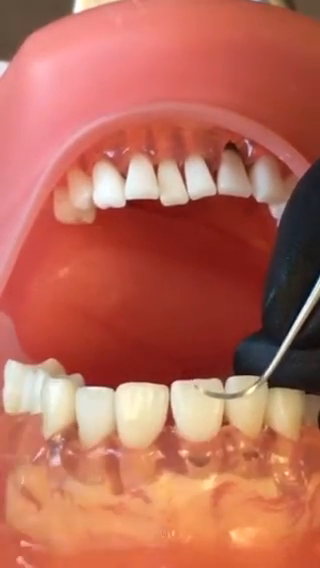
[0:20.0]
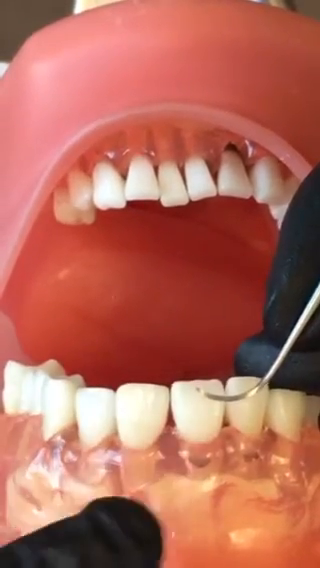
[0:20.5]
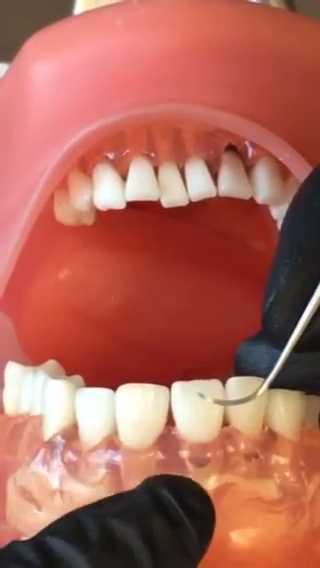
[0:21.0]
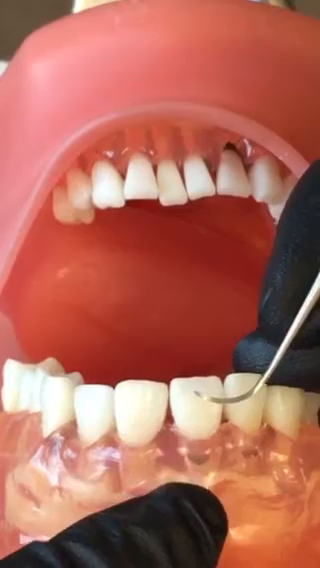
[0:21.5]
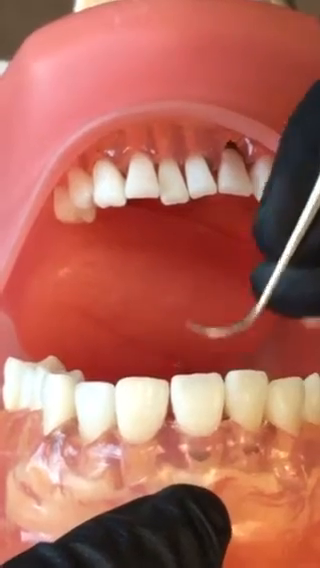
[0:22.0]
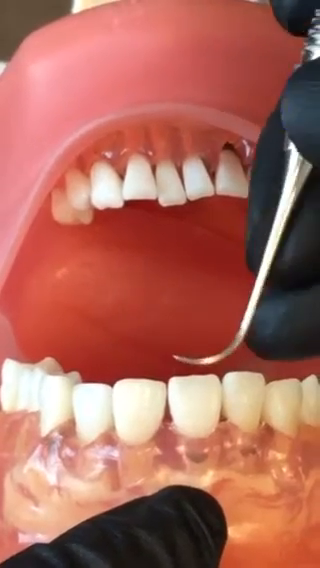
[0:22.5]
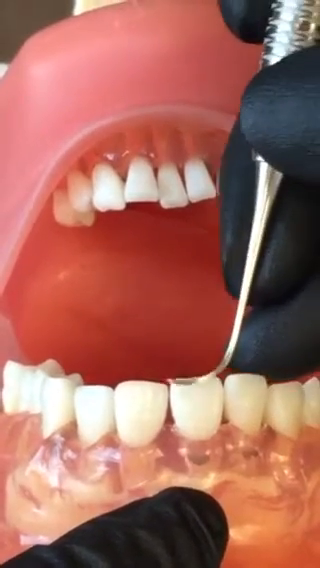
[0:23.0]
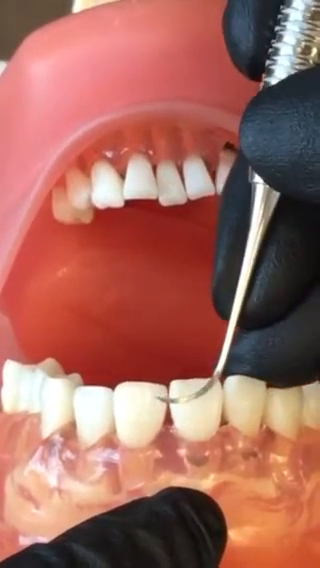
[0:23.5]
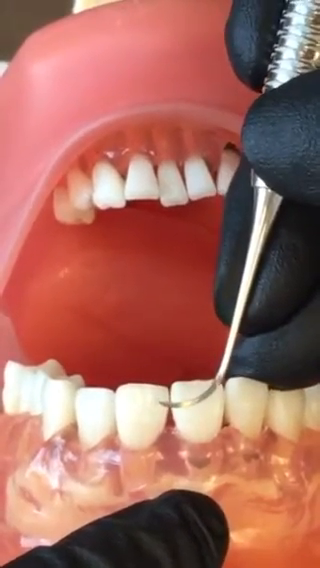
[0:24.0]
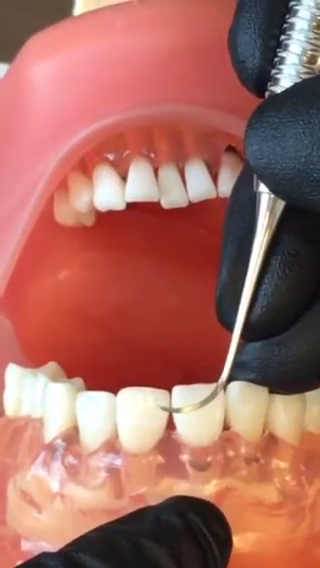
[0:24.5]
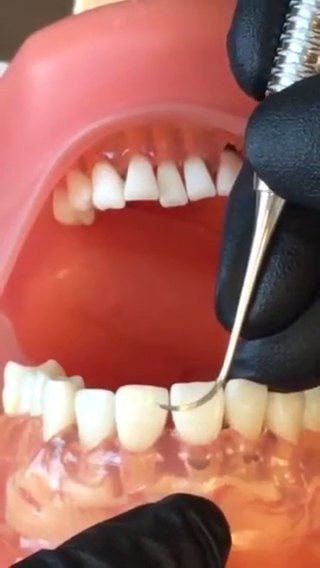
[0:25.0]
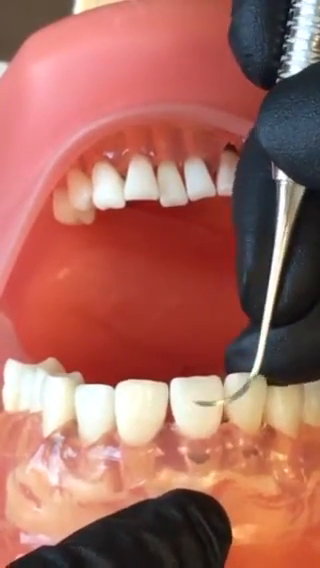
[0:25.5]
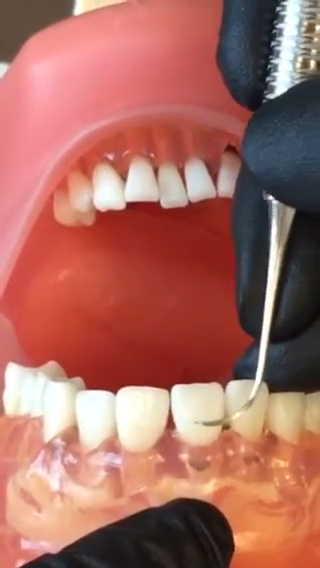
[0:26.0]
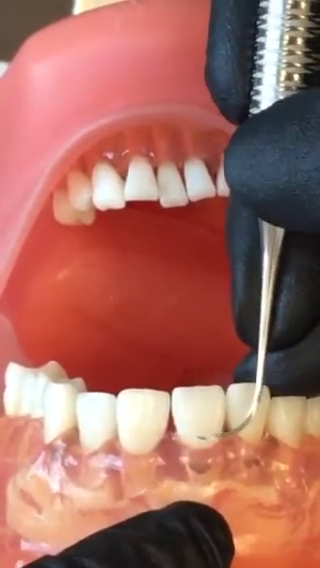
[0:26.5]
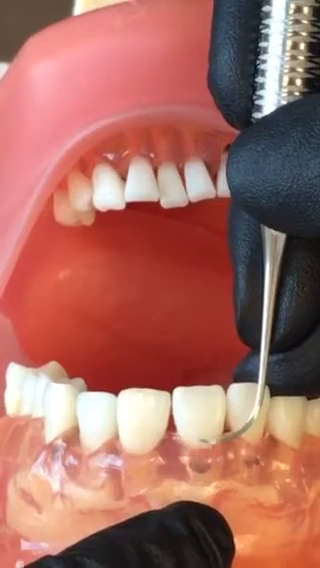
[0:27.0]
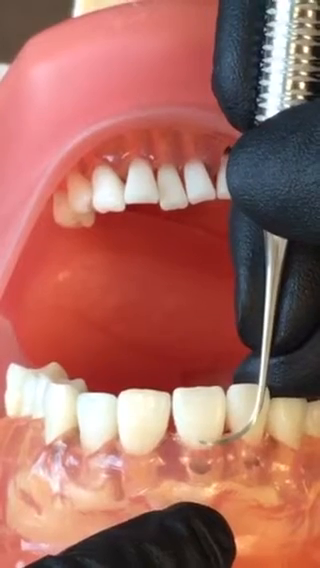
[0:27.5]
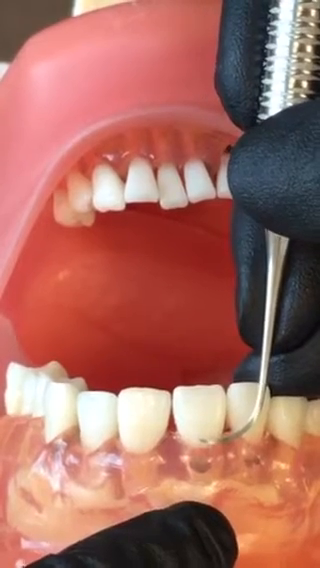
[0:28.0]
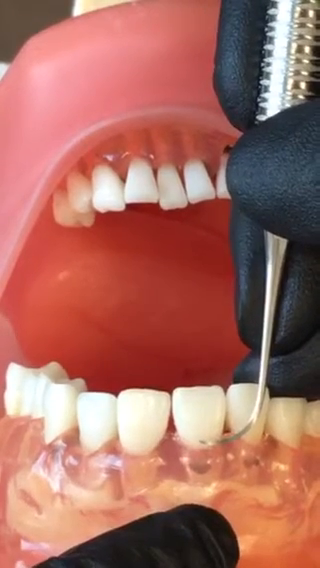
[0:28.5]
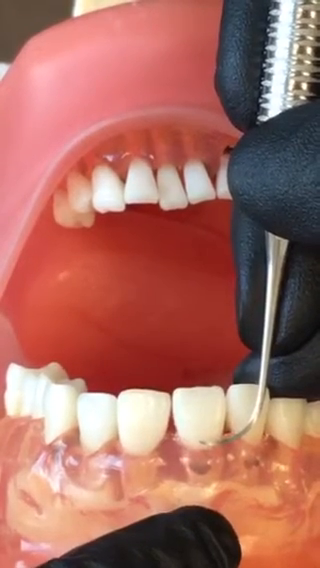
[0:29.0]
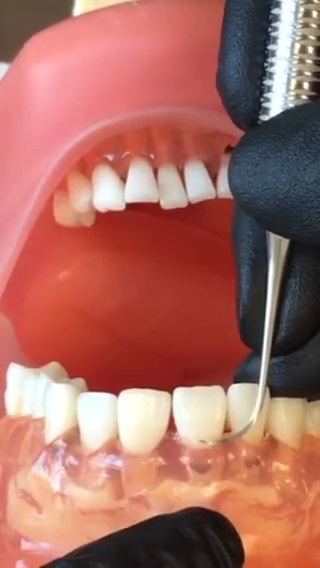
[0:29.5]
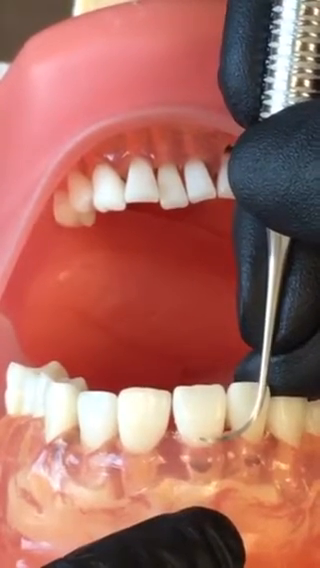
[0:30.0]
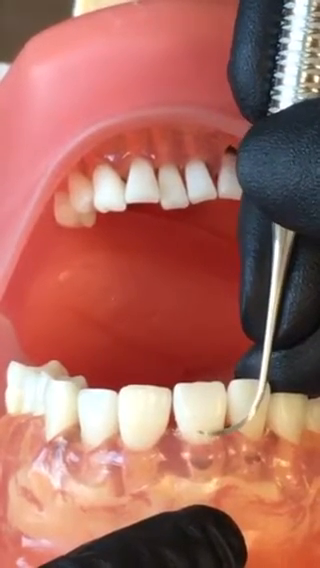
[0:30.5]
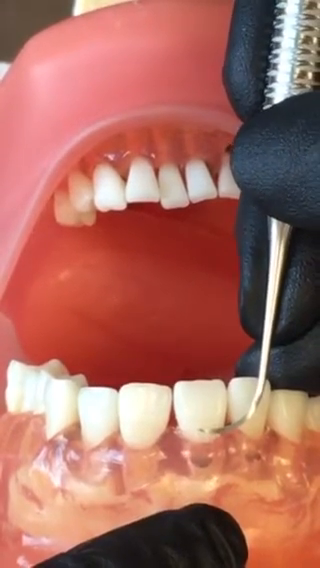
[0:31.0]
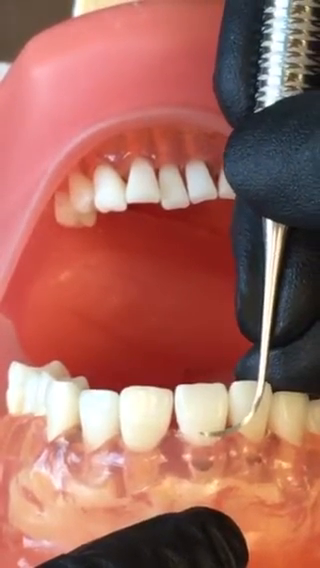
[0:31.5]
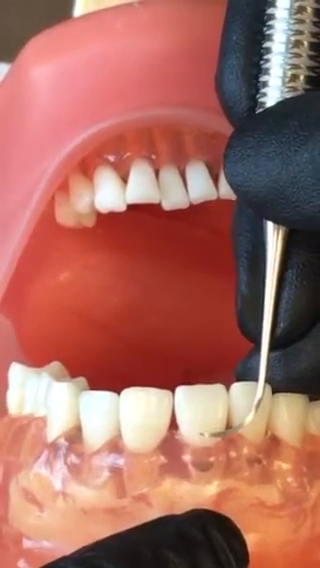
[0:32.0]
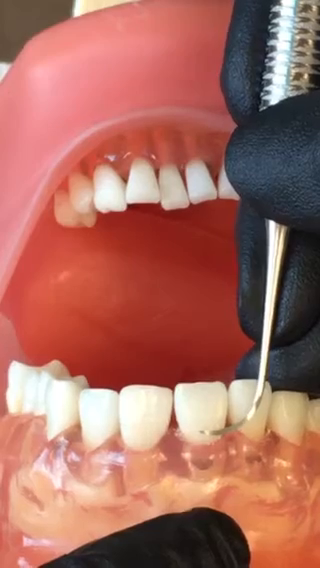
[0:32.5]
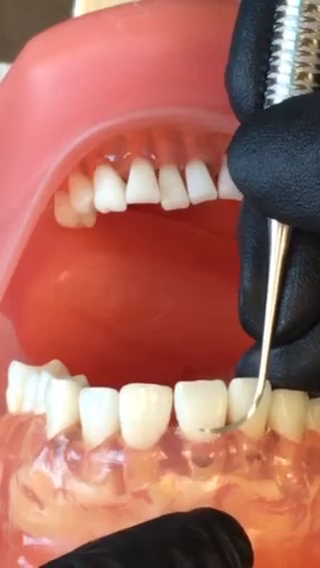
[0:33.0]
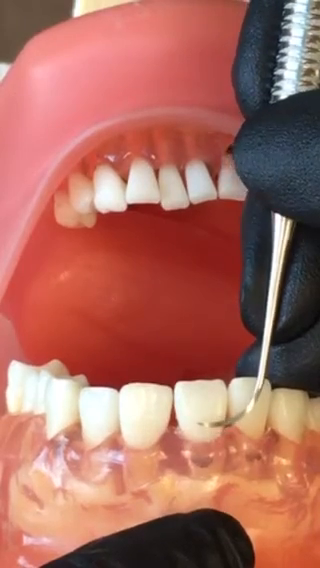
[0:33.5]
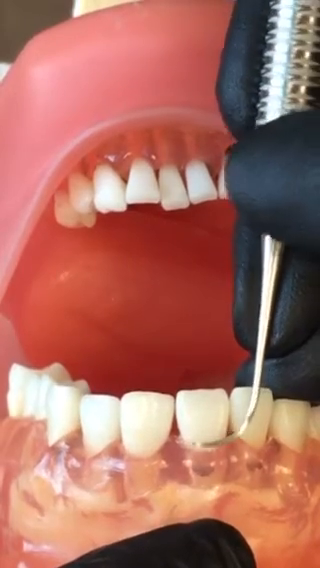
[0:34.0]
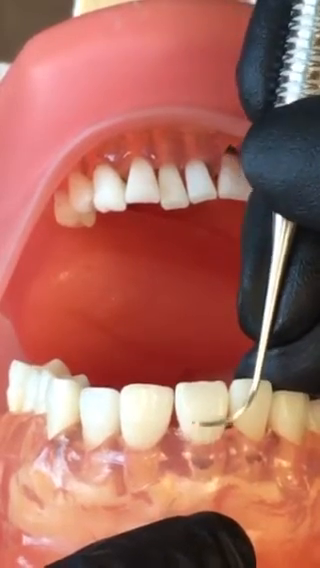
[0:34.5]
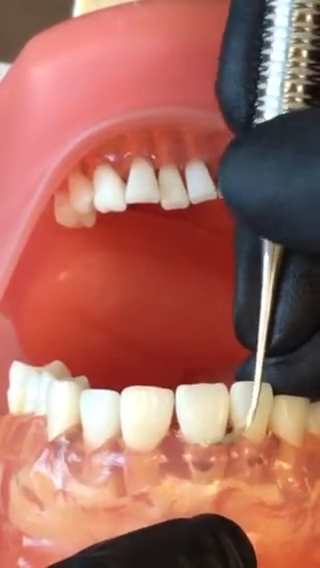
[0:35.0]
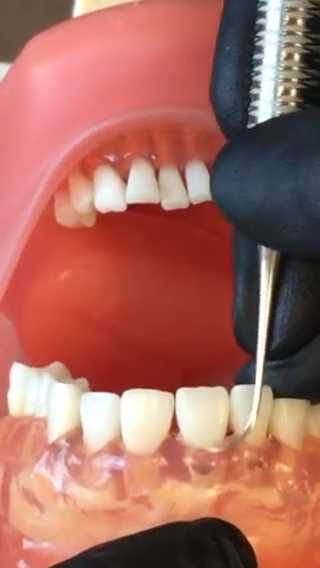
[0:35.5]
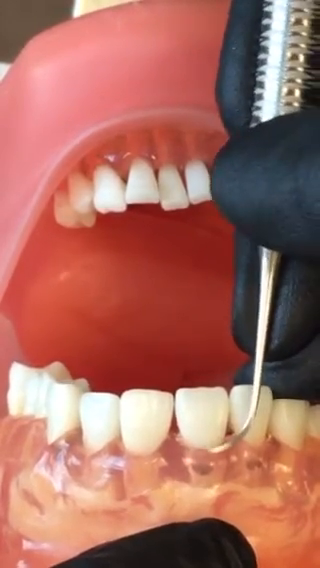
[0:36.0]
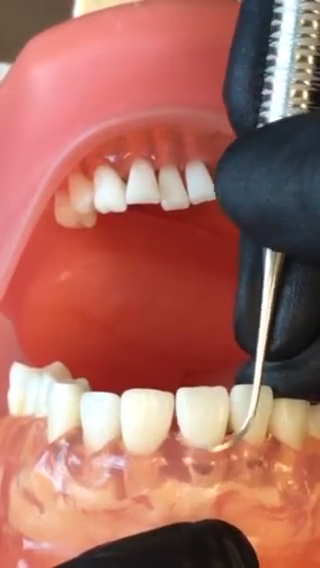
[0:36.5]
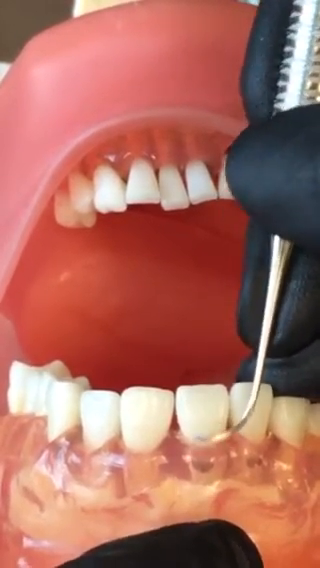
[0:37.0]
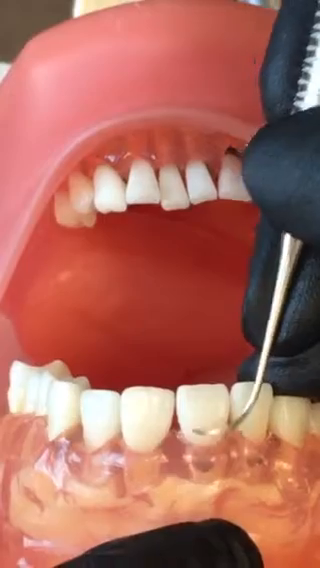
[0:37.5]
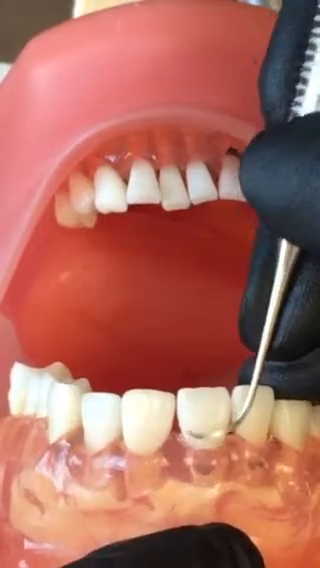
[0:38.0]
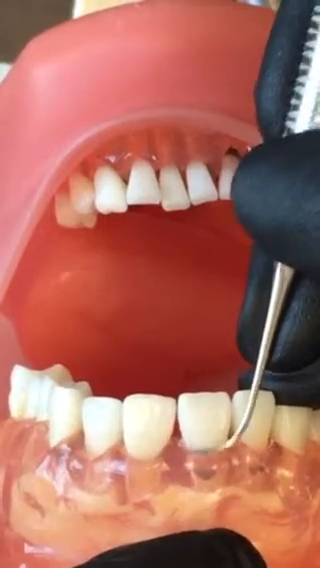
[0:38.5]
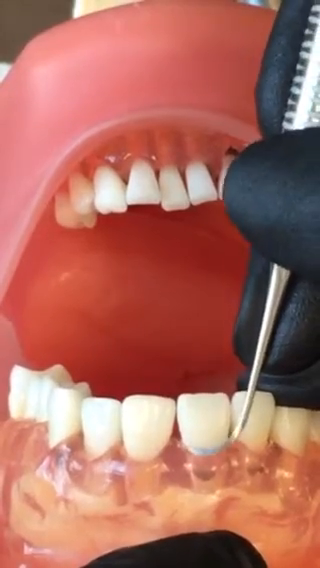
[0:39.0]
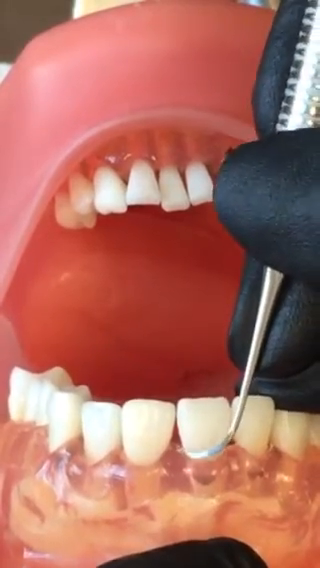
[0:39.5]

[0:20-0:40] With the other hand, the dental student or instructor pulls the upper lip back to expose more of the gum line. With the hand holding the scraper, they place the scraper right above the gum line of the first of the upper front incisors and begin an up-and-down scraping motion, repeating it about six or seven times until the end of the shot. In the bottom row, one tooth looks loose, with what seems to be a gap between the tooth and the gum line.